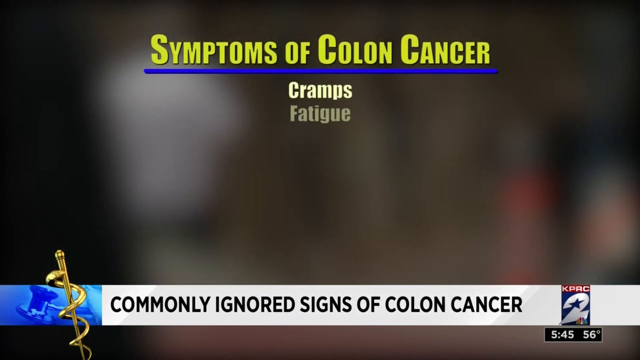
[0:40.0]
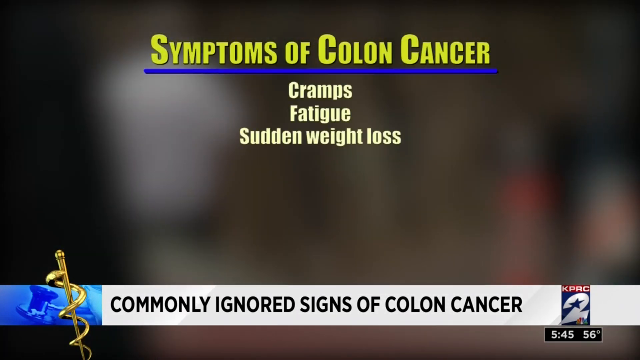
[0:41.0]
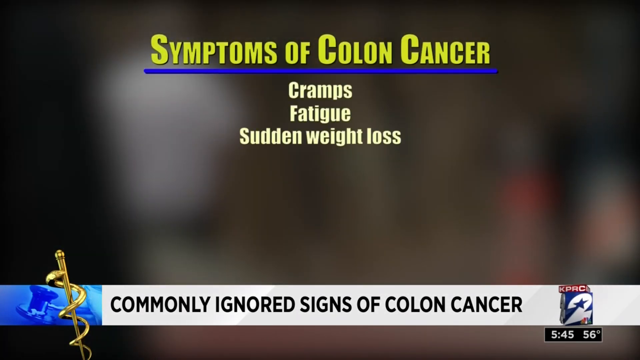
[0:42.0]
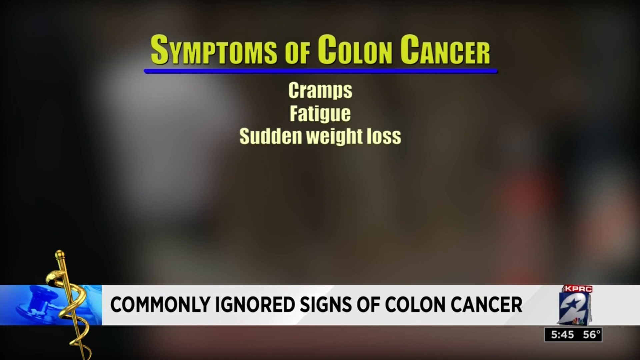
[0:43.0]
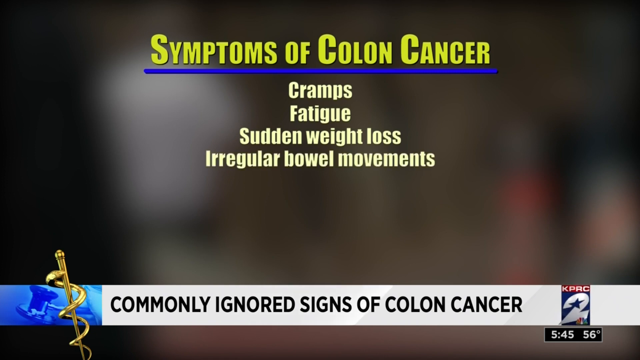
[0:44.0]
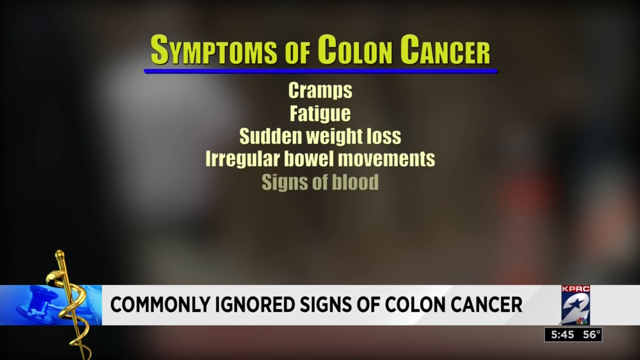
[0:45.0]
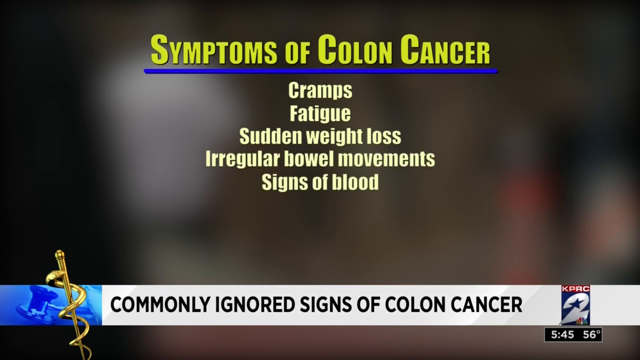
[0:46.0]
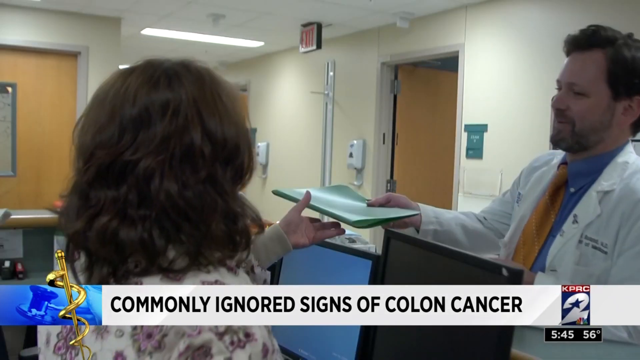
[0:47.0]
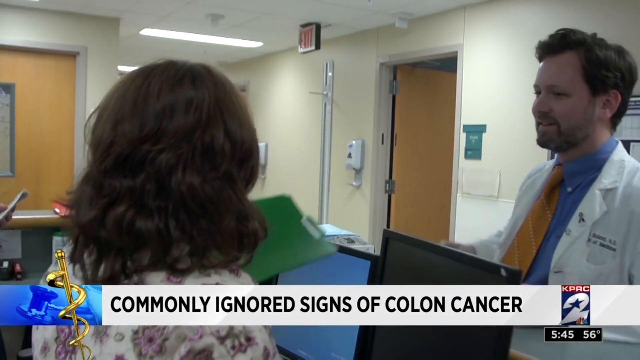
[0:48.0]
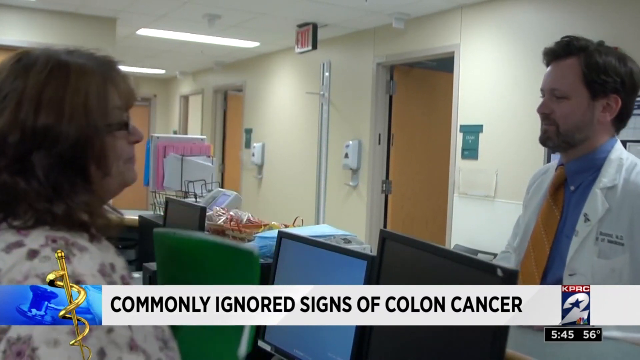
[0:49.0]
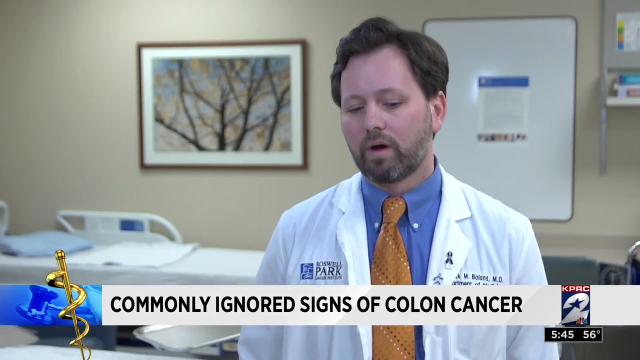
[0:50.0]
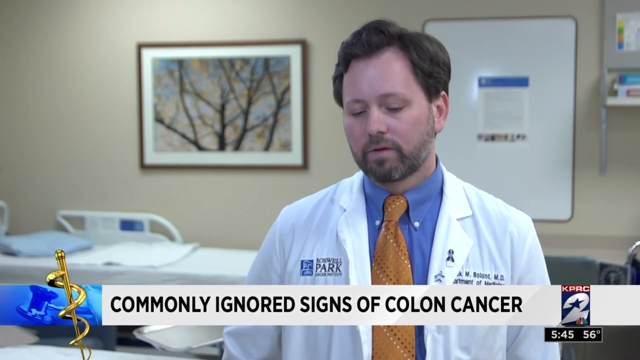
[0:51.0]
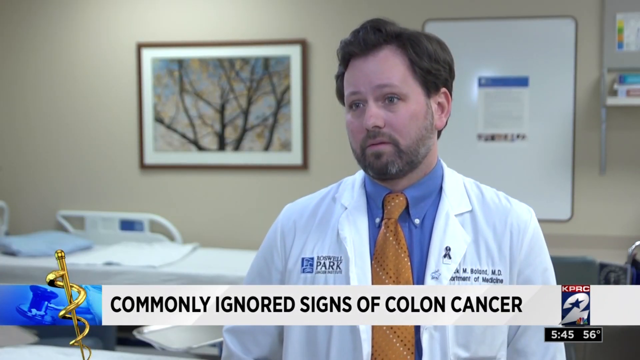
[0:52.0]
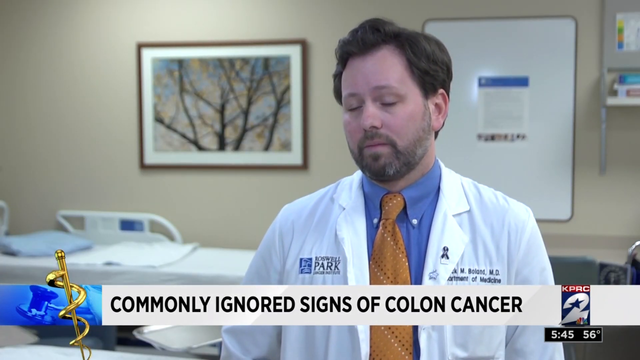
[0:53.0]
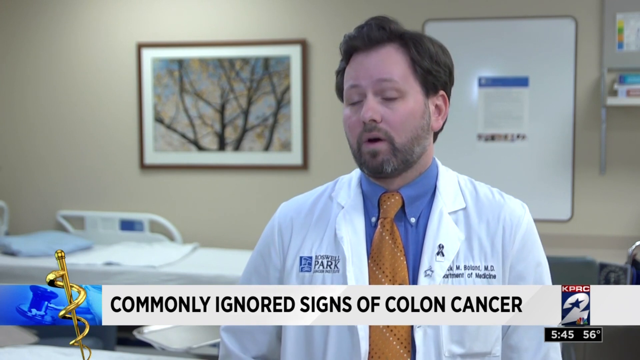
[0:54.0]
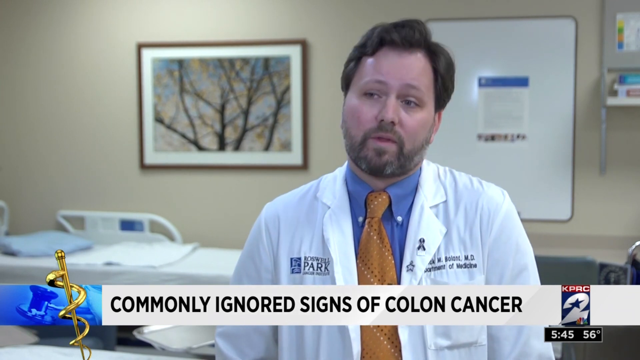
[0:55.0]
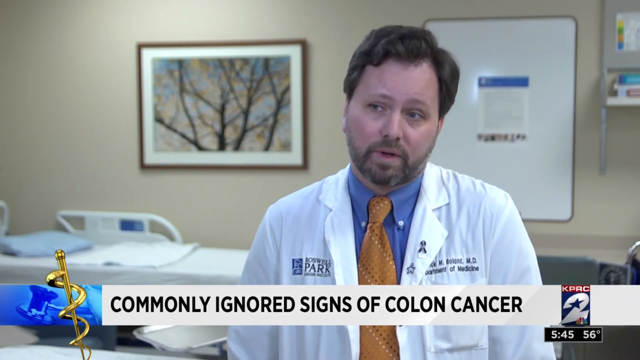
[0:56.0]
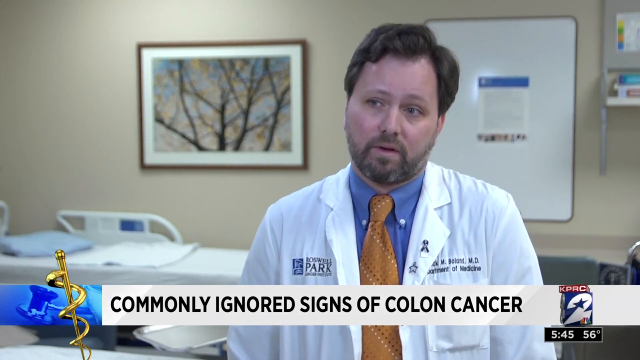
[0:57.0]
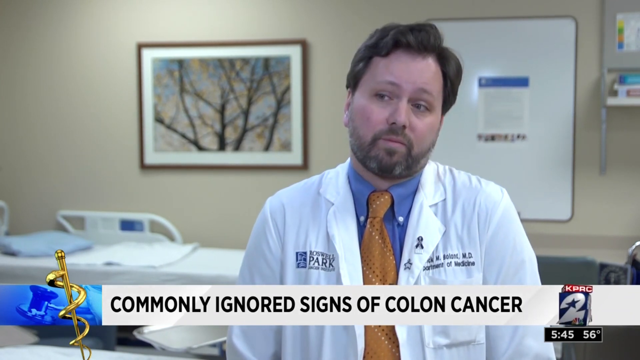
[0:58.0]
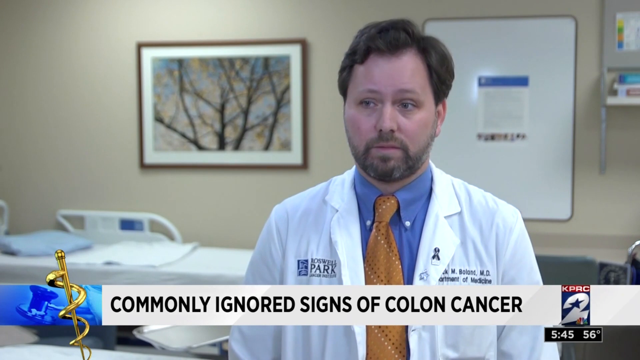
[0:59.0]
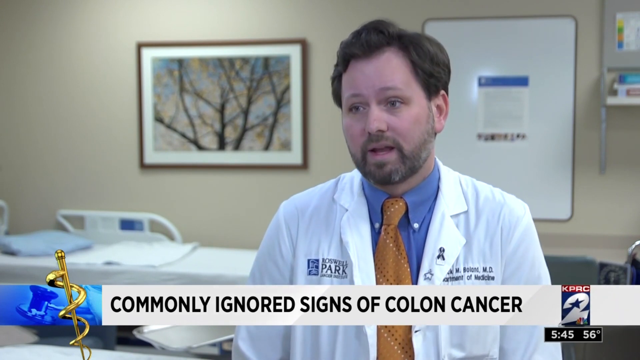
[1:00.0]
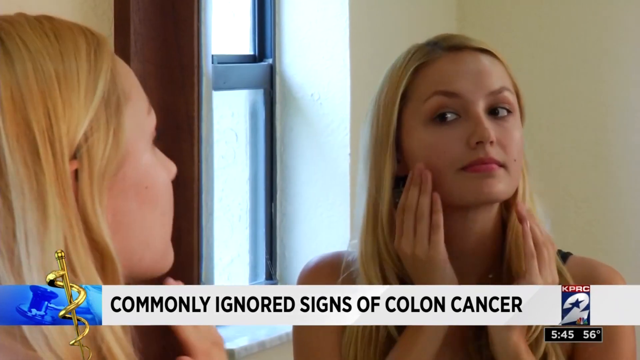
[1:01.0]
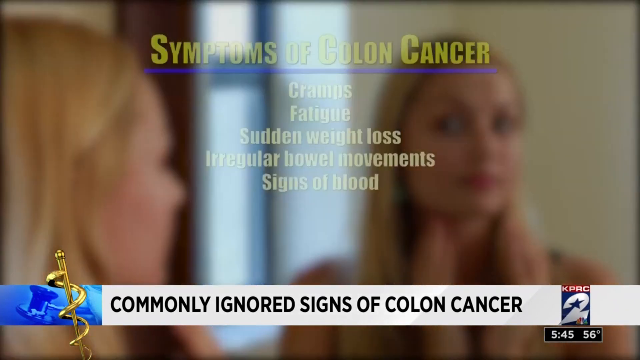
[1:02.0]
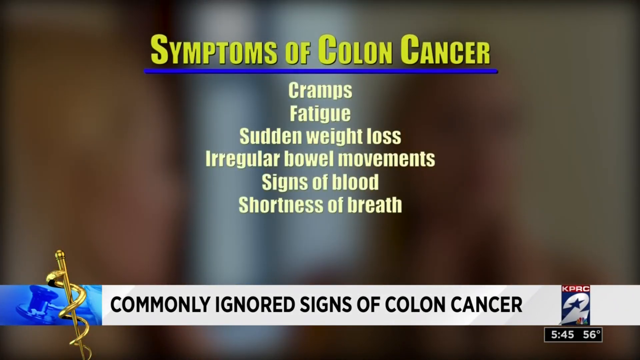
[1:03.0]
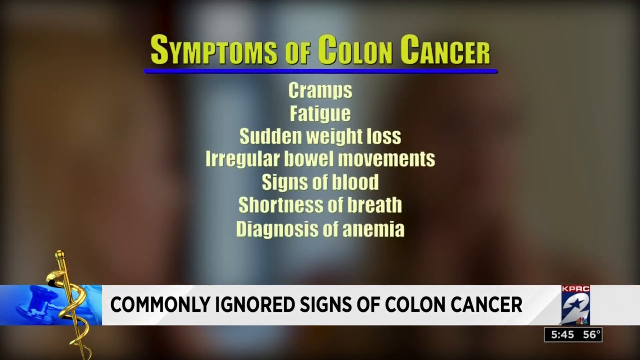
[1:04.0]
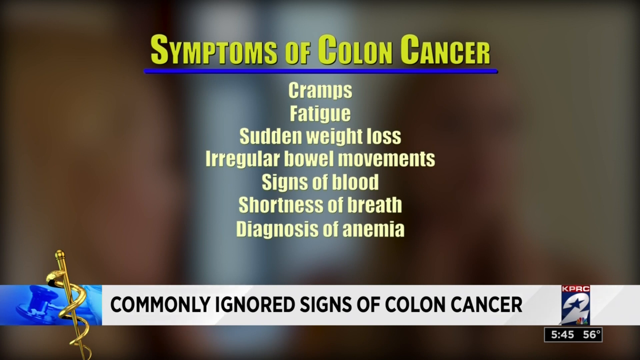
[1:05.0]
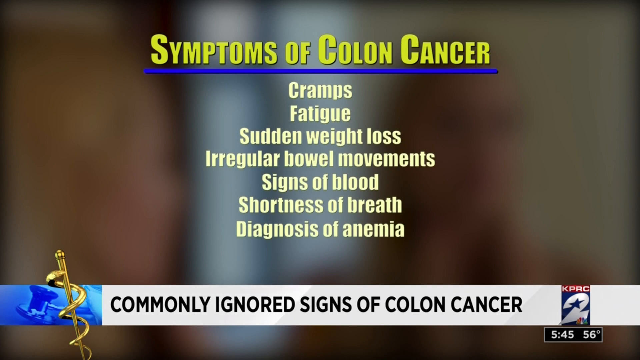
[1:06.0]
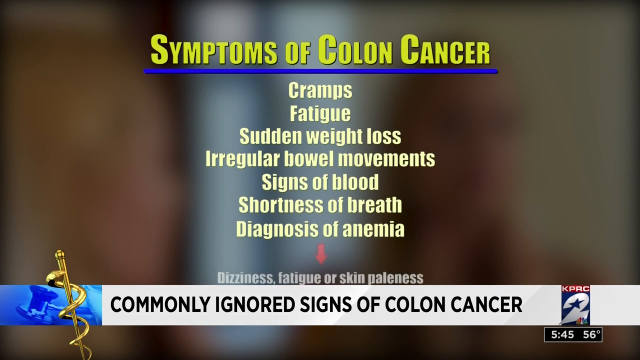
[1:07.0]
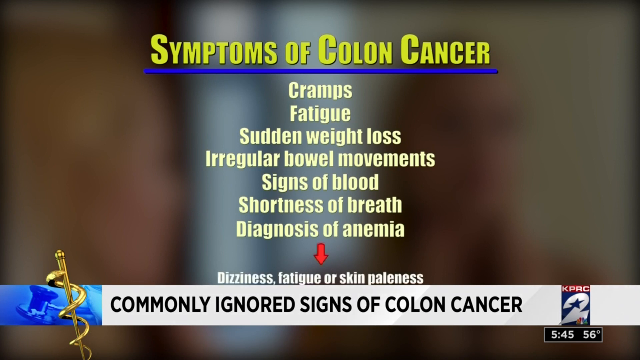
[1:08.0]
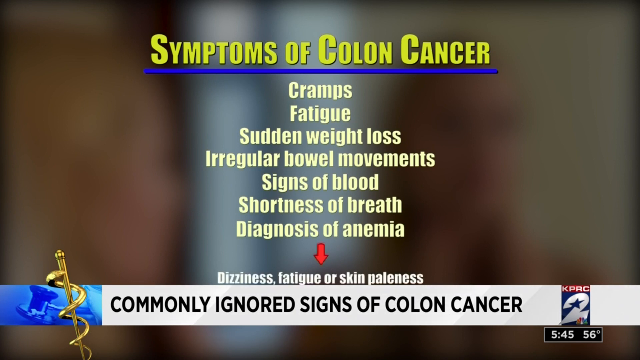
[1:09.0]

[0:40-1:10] The KPRC Channel 2 News broadcast from Houston, Texas shows text at the bottom of the screen reading "commonly ignored signs of colon cancer". Over a blurry background, yellow text reads "symptoms of colon cancer" with a blue underline, and below it: "cramps, fatigue, sudden weight loss, irregular bowel movements, signs of blood". Next, a doctor in a white jacket, a blue shirt and an orange tie hands a document to a person standing behind a counter with a computer open. The doctor is then interviewed in a room with a bed and a whiteboard behind him, and there is also a framed picture of a tree. The symptoms of colon cancer appear again on the screen: "cramps, fatigue, sudden weight loss, irregular bowel movements, signs of blood, shortness of breath, diagnosis of anemia, dizziness, fatigue or skin paleness".